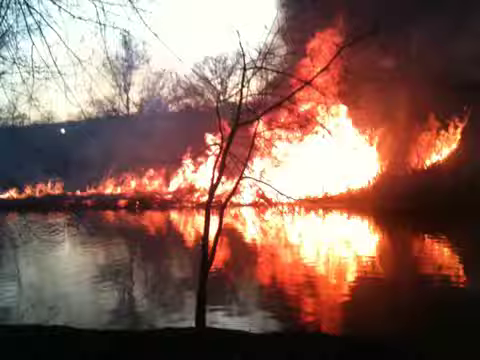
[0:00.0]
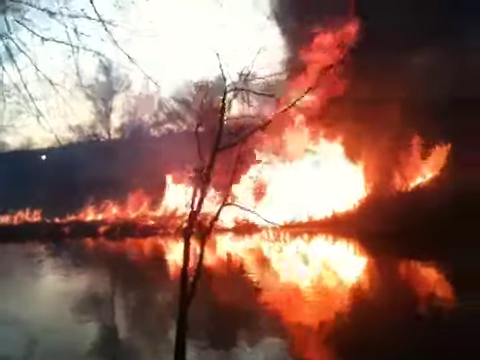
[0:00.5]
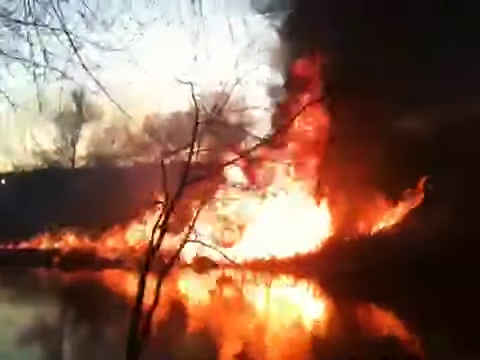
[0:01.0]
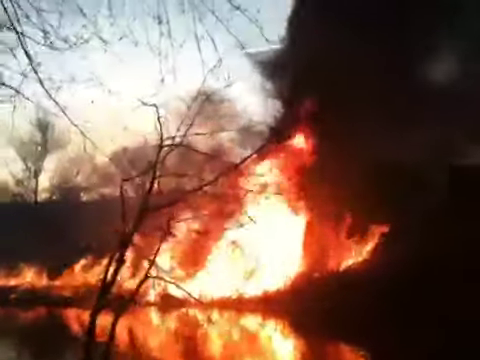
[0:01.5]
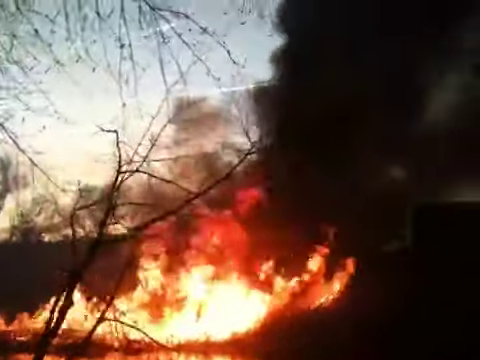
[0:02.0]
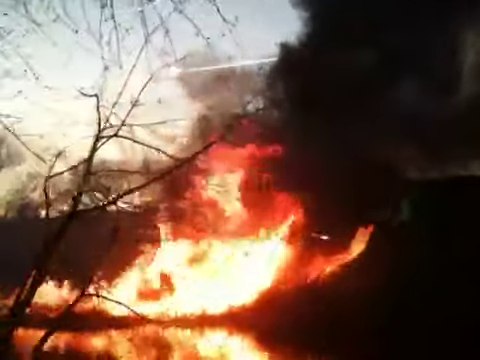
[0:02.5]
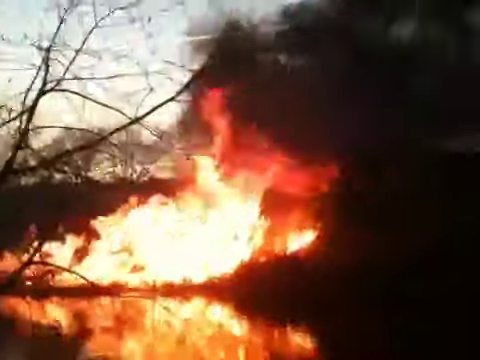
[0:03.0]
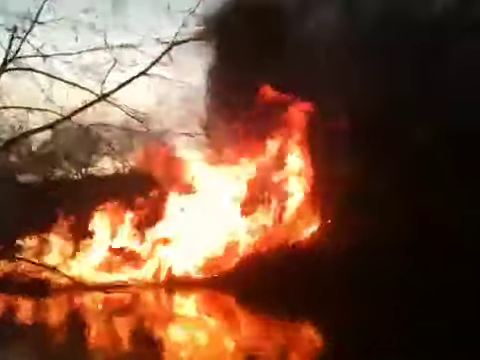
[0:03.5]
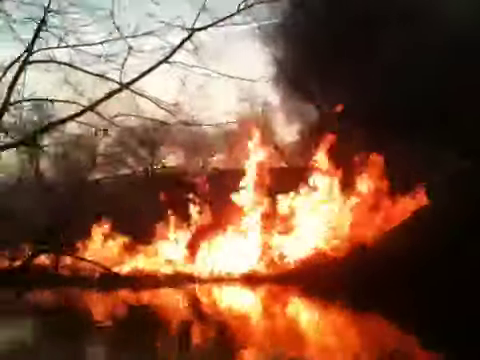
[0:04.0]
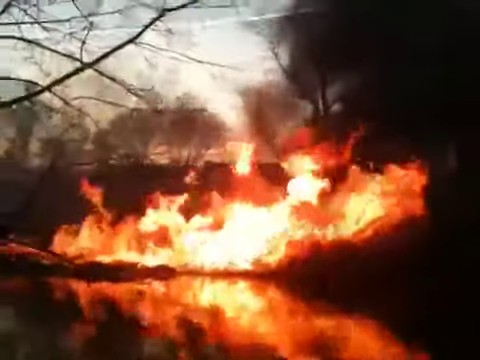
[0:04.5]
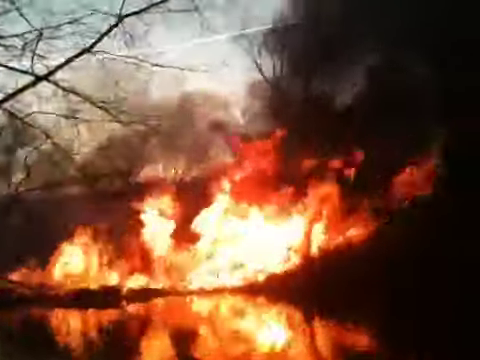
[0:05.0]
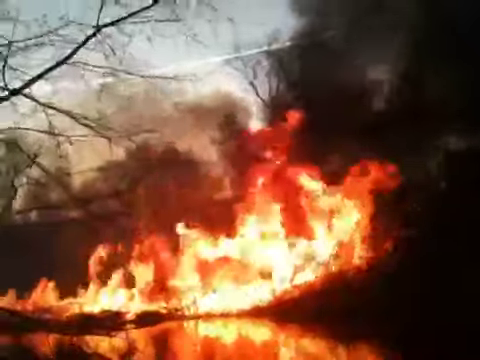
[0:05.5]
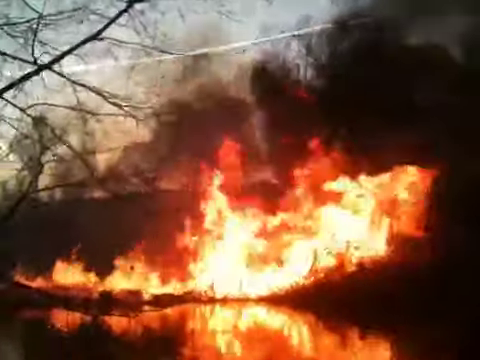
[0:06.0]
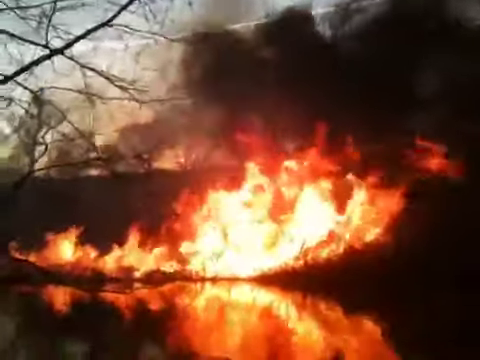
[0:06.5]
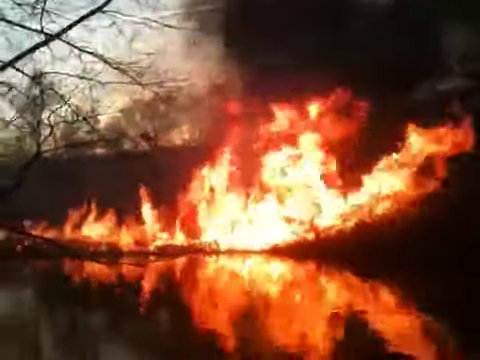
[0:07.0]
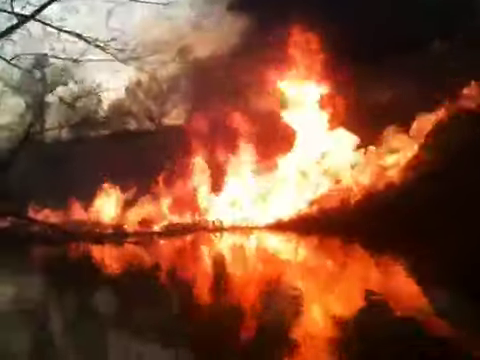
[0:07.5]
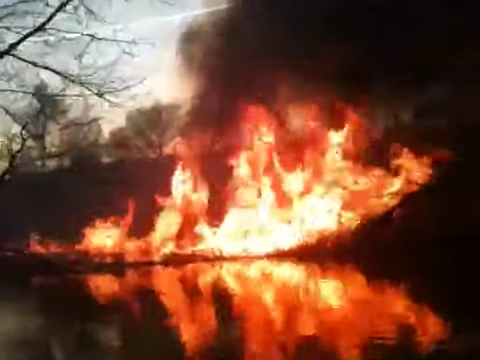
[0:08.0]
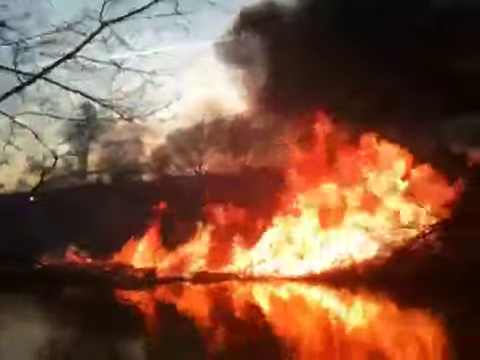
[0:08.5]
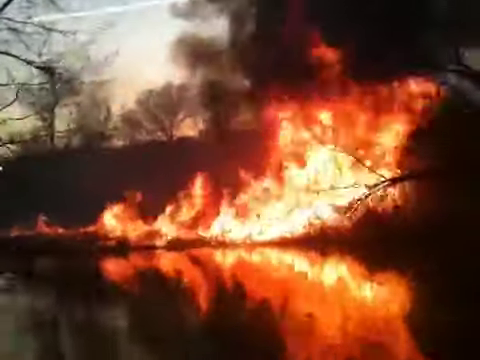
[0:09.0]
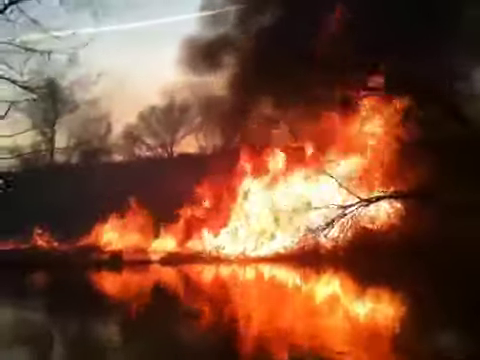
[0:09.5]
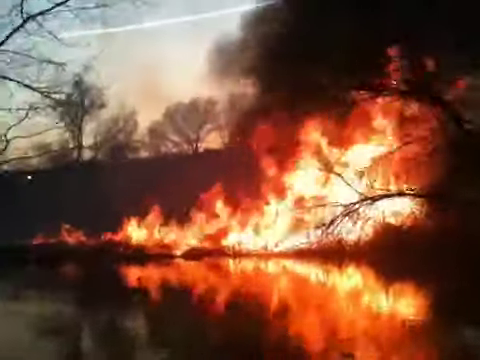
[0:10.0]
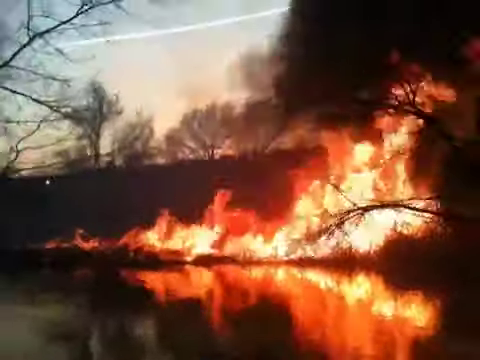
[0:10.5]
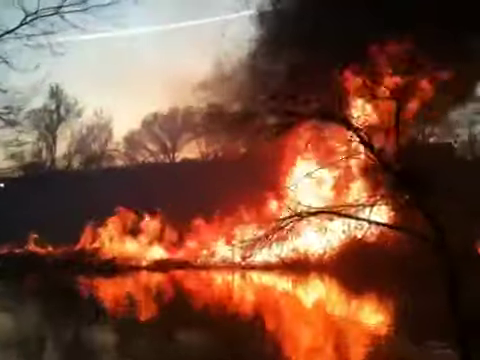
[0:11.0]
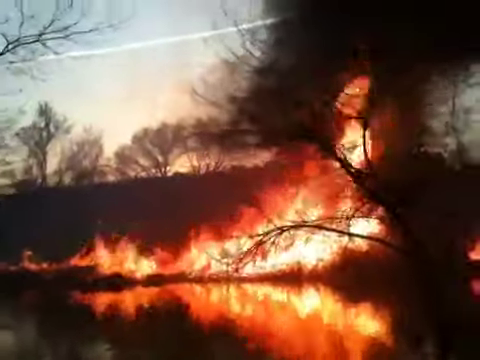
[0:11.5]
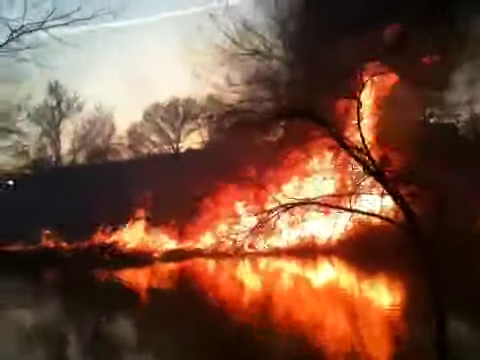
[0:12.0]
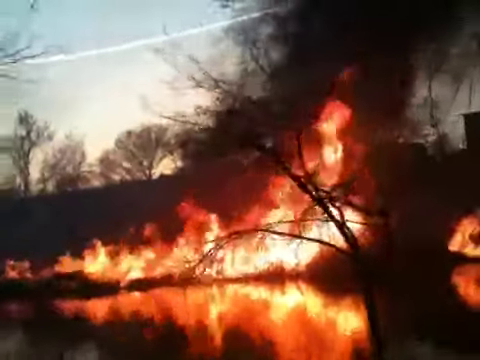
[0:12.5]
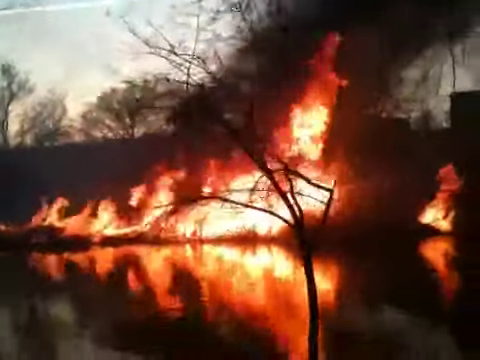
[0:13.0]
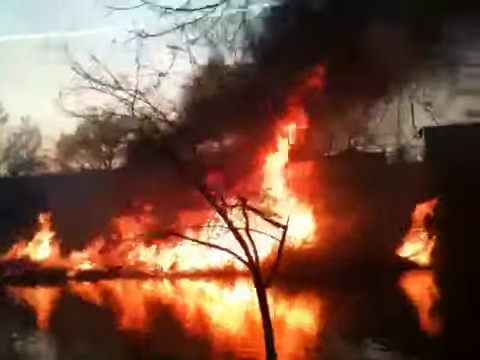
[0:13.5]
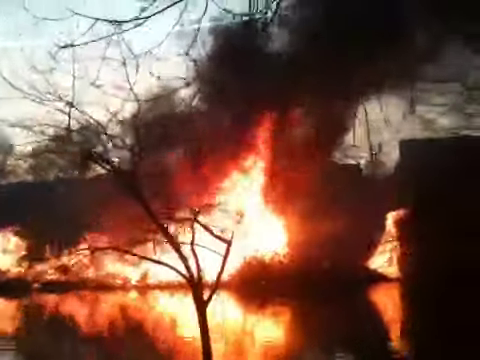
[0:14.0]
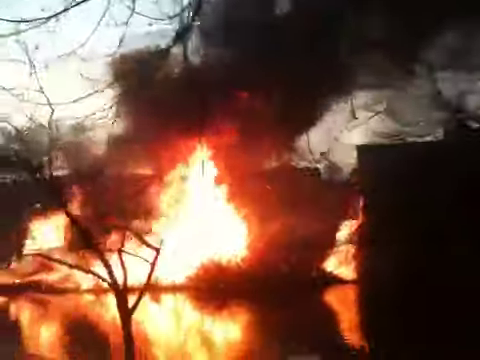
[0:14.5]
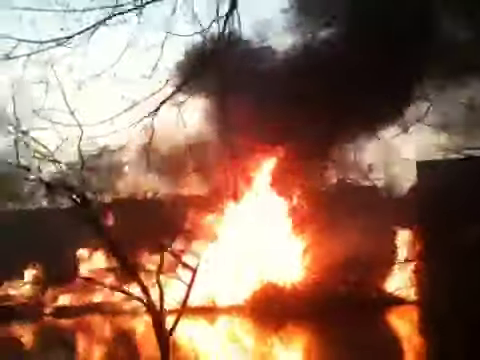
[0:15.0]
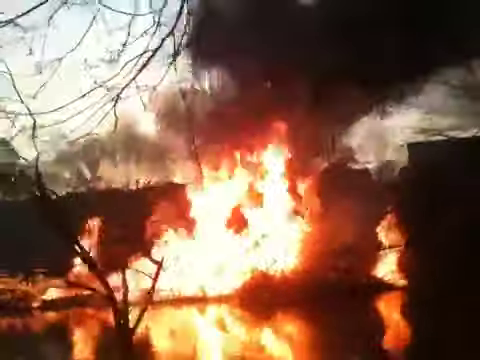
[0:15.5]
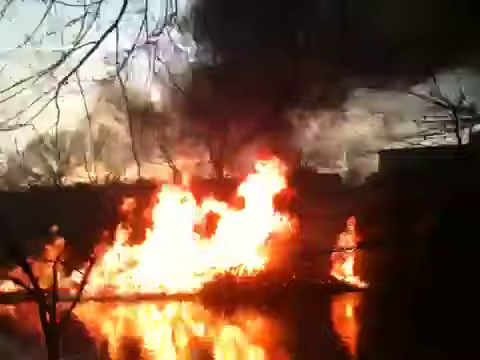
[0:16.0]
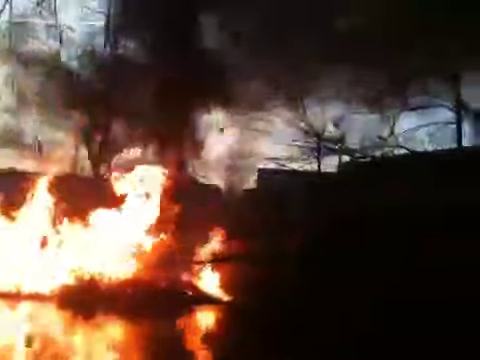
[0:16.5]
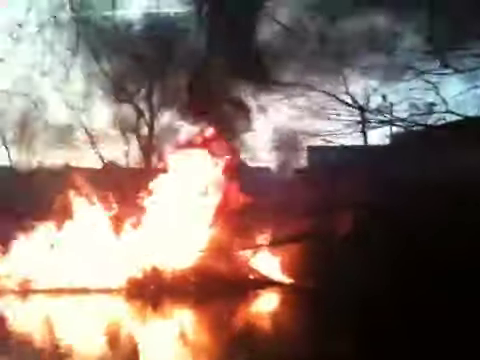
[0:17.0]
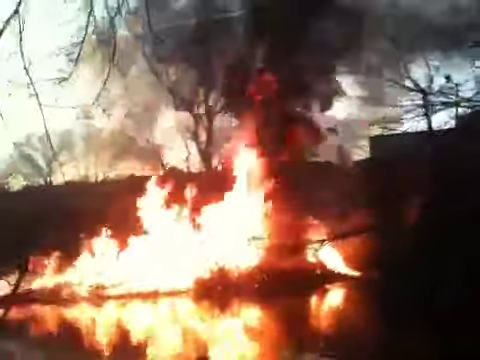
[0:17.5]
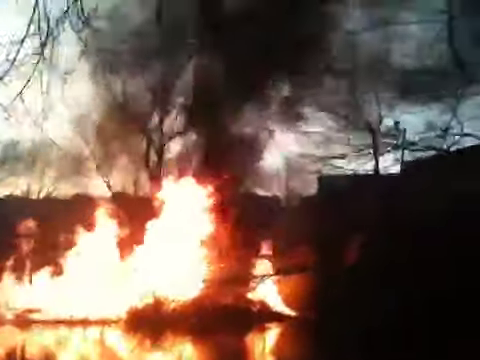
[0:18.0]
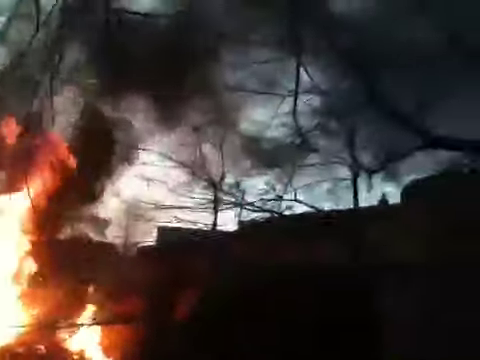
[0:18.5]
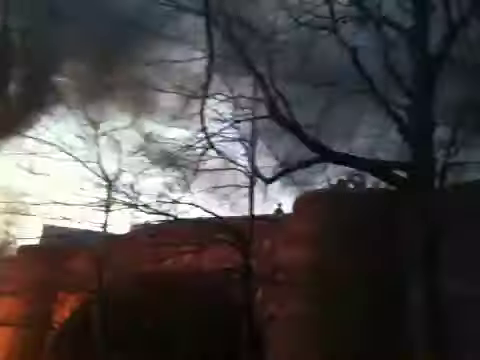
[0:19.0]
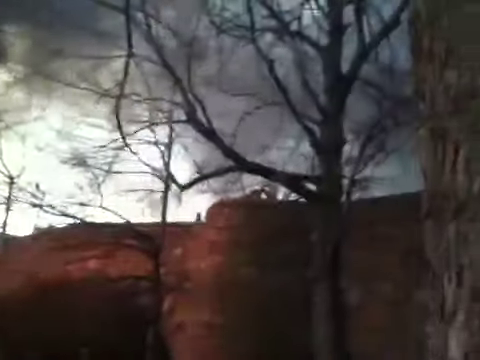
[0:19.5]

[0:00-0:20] A raging fire fills the opening scene. The time of day is either dusk, dawn, or just a gray day, since the sky is quite gray in the background, noticeably in the upper left corner. The view begins on the west side, and following the fire toward the east along a horizontal line, the flames become much higher. The fire is set against the line of a river below, and its very vibrant colors are reflected in the water: somewhat white at the base, then an area of yellow, followed by oranges and reds toward the tops of the flames. Above, especially on the east side, is a lot of thick, dense, billowing black smoke. The camera is very shaky. Some trees appear to have possibly already been burnt, as their branches look very bare.